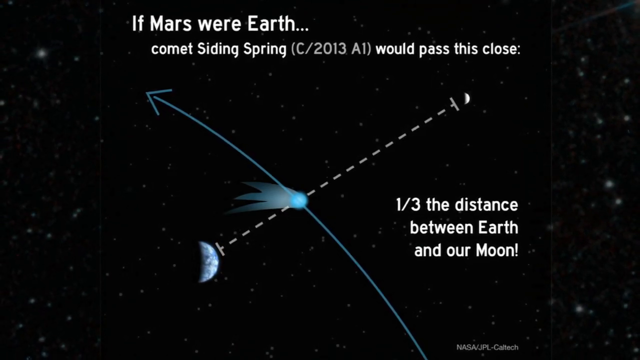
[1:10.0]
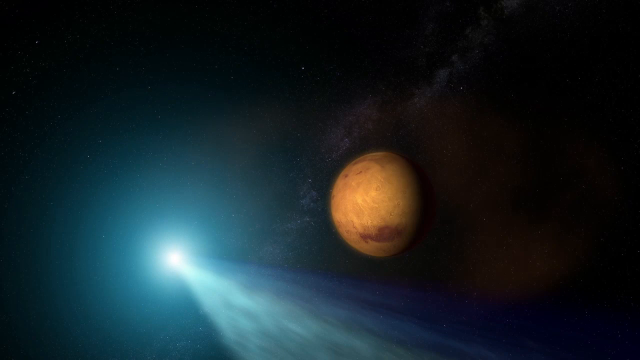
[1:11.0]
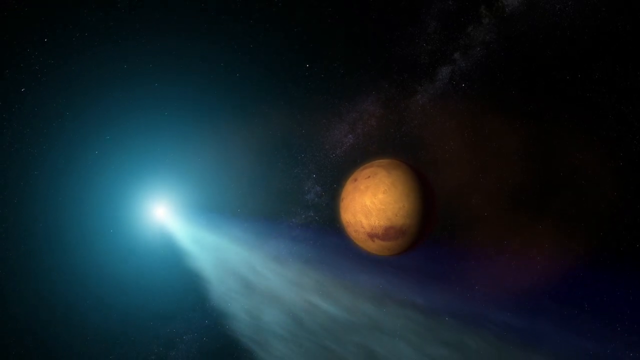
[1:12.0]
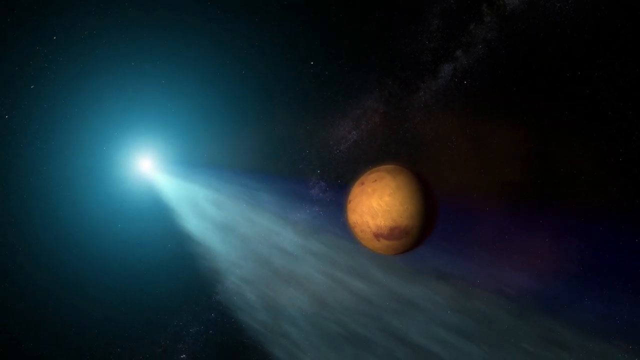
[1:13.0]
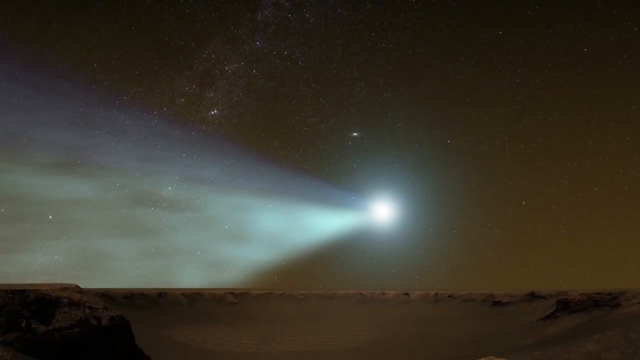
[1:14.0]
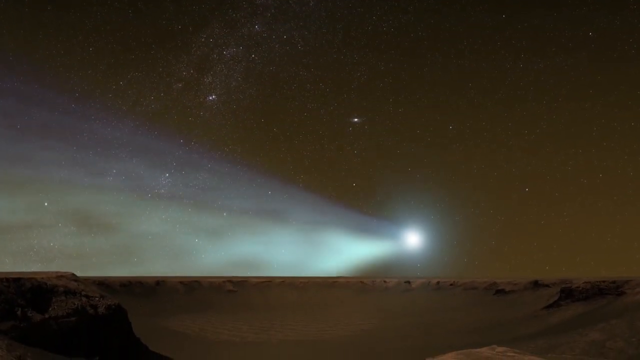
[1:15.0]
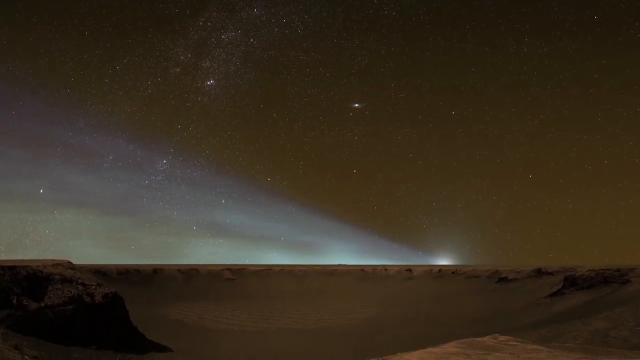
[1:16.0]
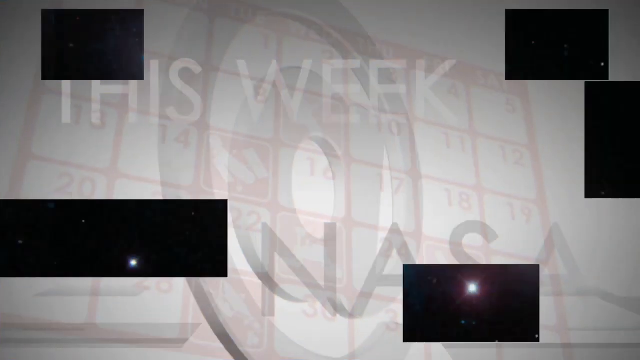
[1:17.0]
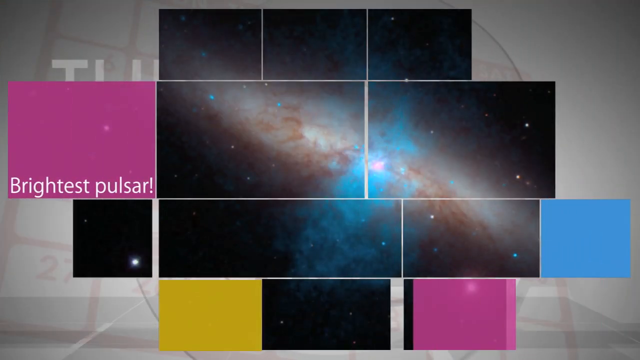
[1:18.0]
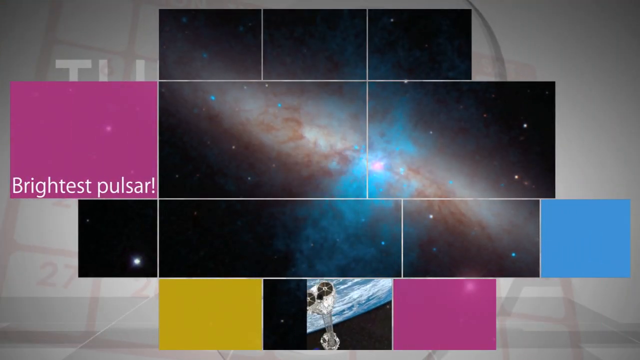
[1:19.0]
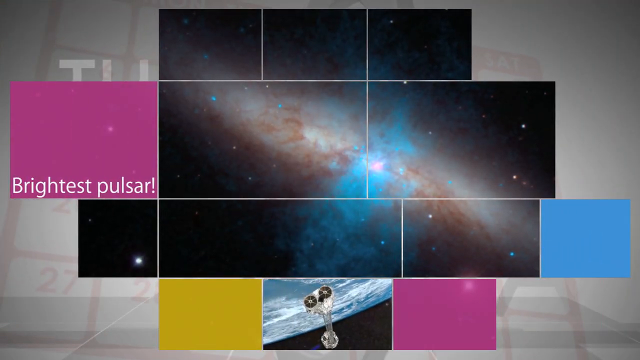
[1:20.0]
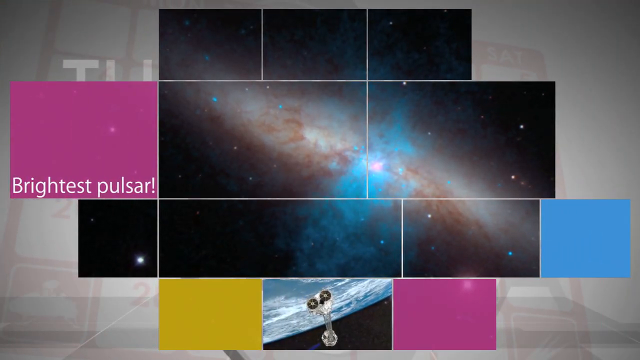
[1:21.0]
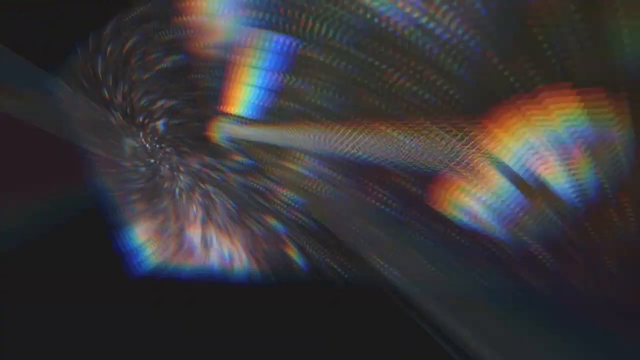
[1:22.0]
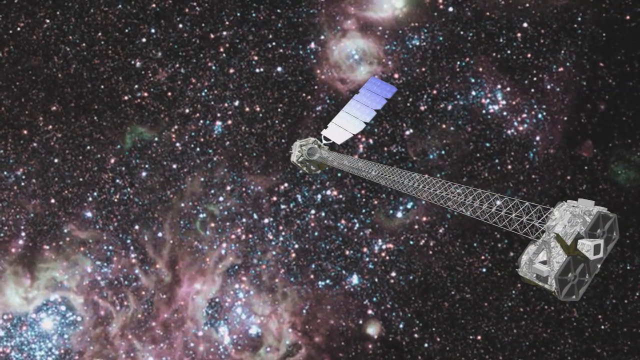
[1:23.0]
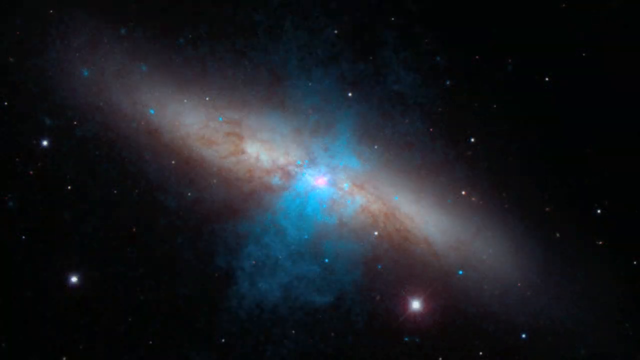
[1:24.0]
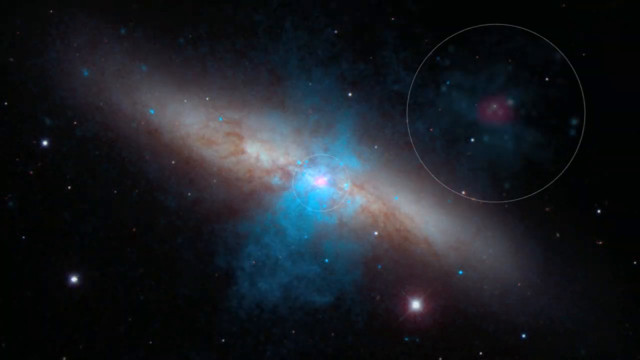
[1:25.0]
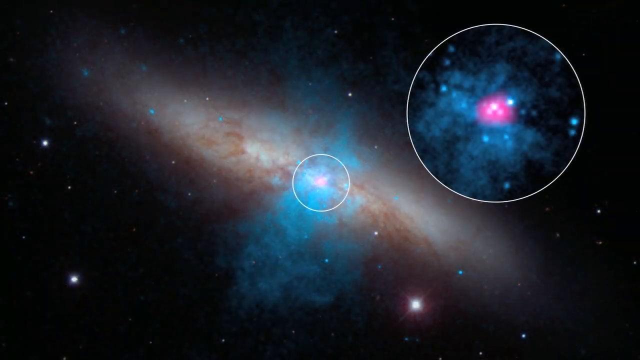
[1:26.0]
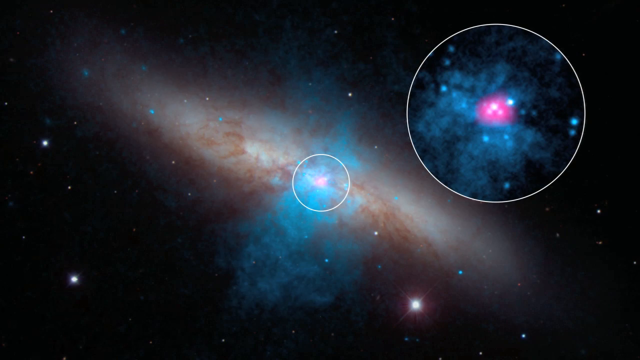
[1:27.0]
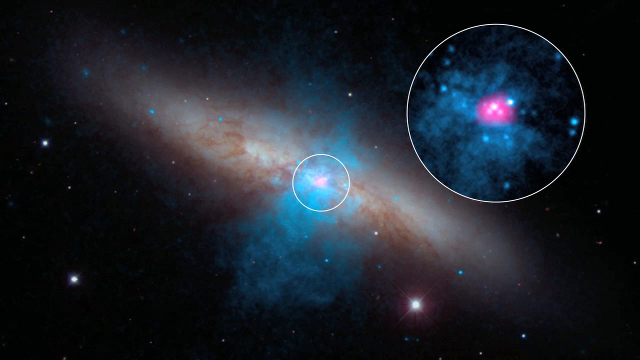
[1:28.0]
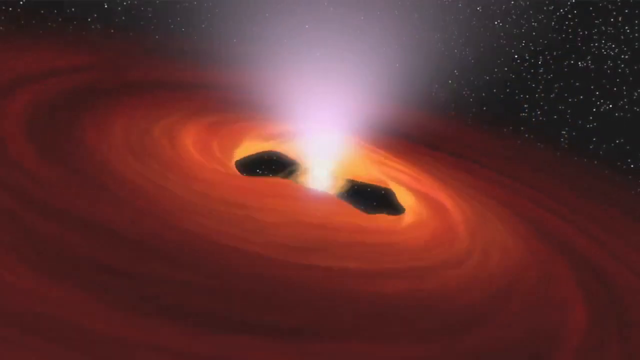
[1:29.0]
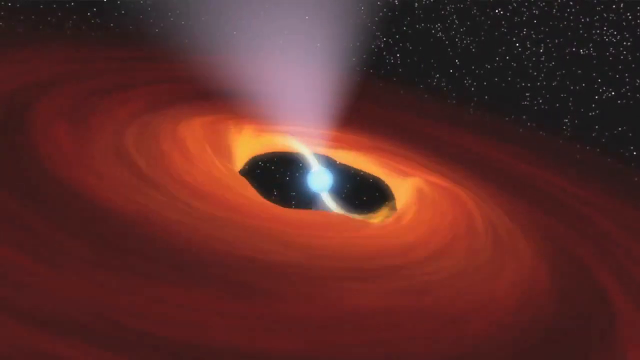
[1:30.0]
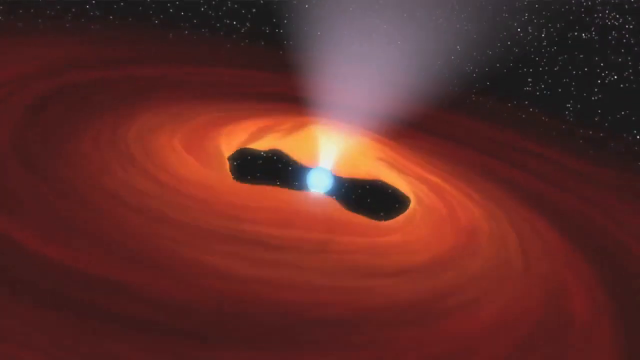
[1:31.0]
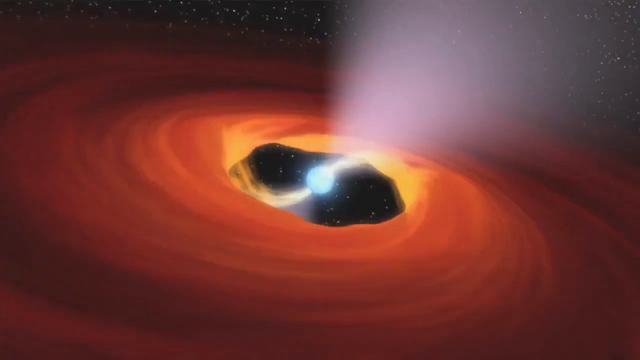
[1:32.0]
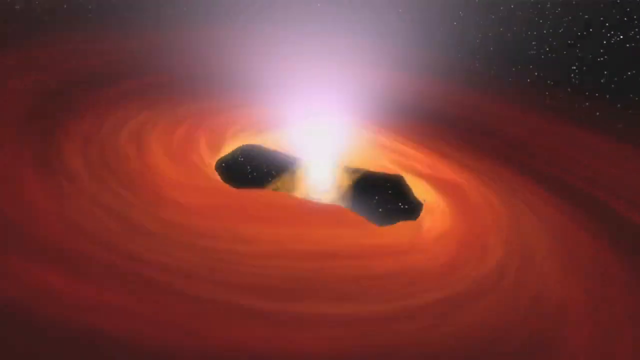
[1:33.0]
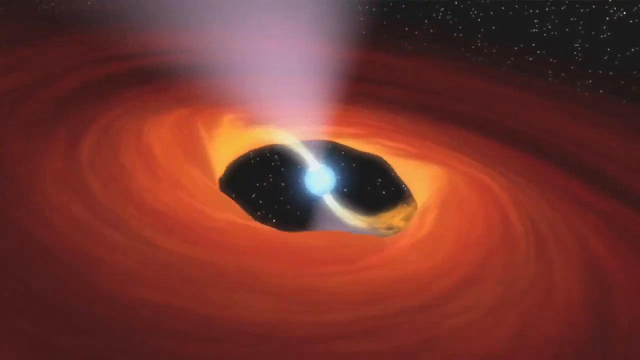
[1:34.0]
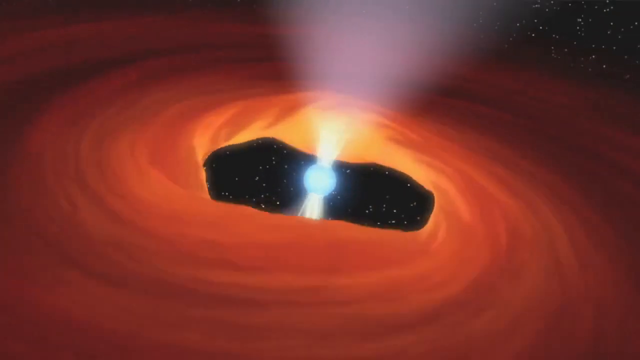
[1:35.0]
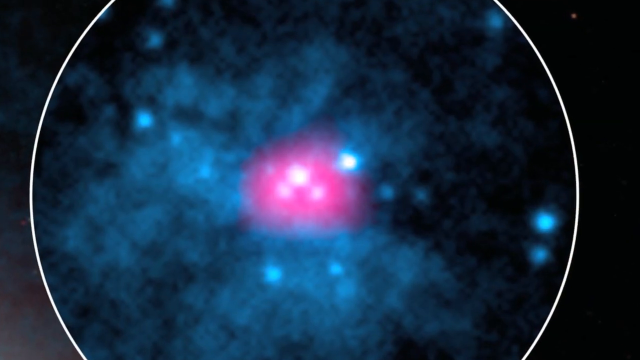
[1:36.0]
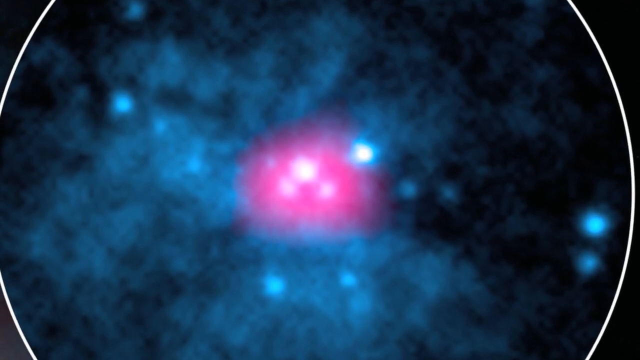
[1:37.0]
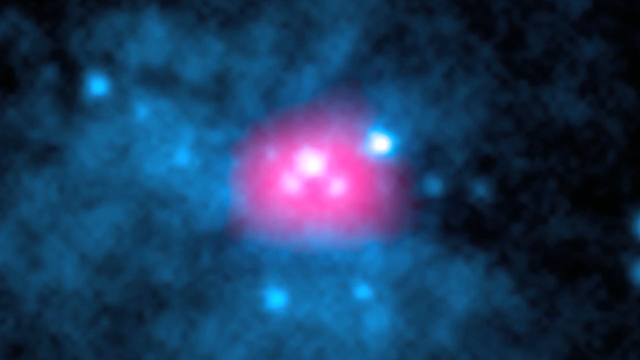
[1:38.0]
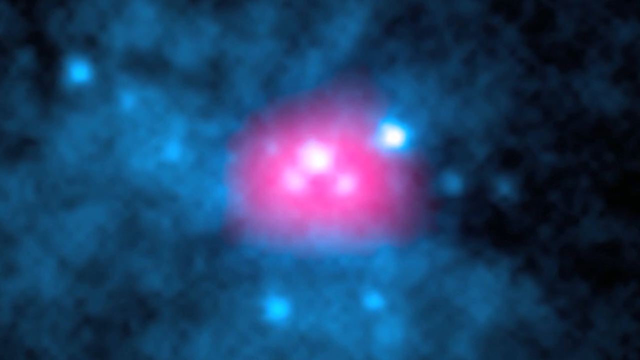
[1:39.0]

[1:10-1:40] An image reads "if Mars were Earth comet sliding spring", followed by a designation in parentheses beginning "C-2013", and "would pass this close". A diagram shows the Earth and the moon, the distance between them, and the trajectory of a comet, with the text "a third the distance between Earth and our moon". A graphical representation then shows a comet passing by the planet as it would look from space and as it would look from the surface of Mars, showing how close the comet would be. On a gray background the text "this week" appears, and different shapes, squares and rectangles, come together to form a screen reading "brightest pulsar". An image shows a satellite floating in space capturing galaxies. A circle is drawn on the picture, and a larger circle shows a zoomed-in version of that area: three bright pink dots at the center of the galaxy. Next comes what looks like swirling around a bright light, probably the pulsar, and the view zooms into the three pink dots.